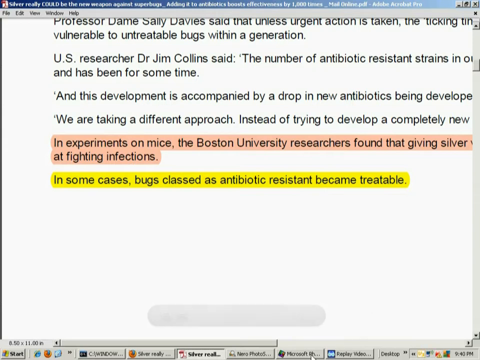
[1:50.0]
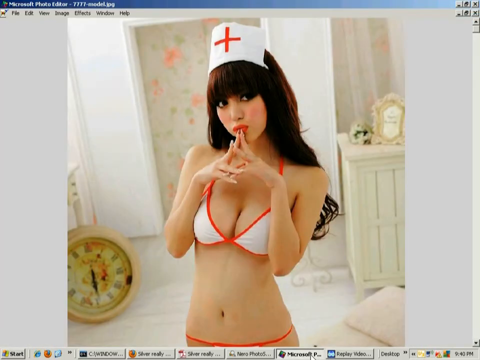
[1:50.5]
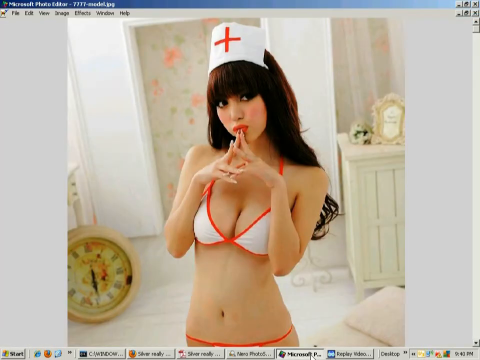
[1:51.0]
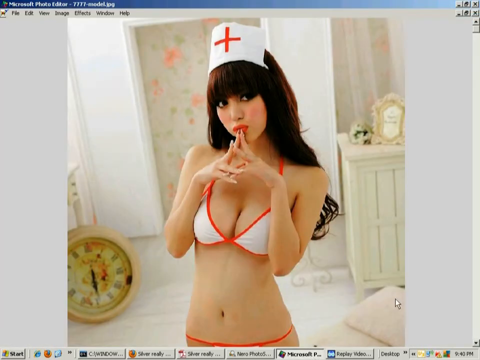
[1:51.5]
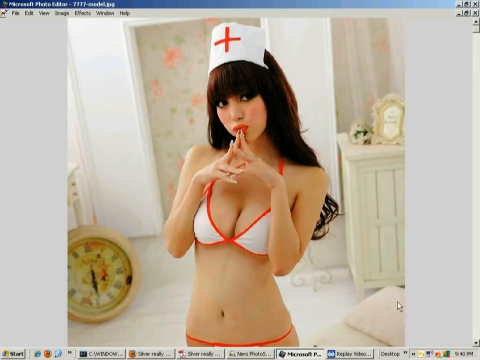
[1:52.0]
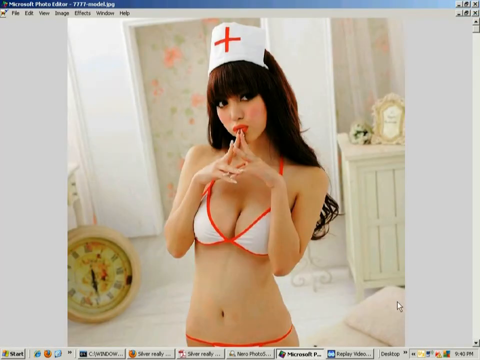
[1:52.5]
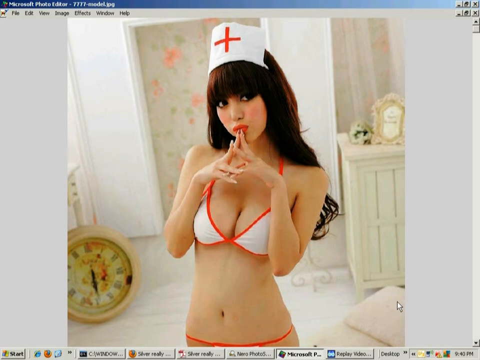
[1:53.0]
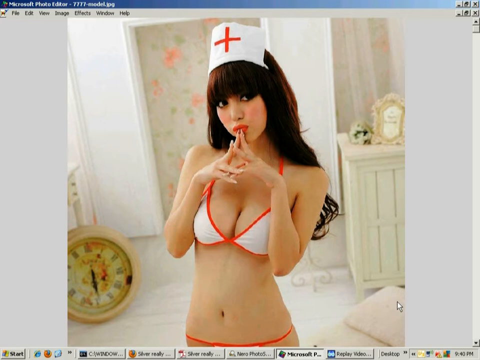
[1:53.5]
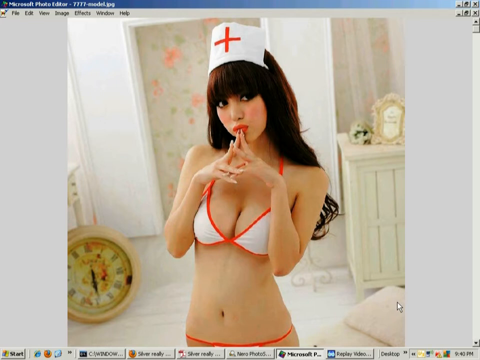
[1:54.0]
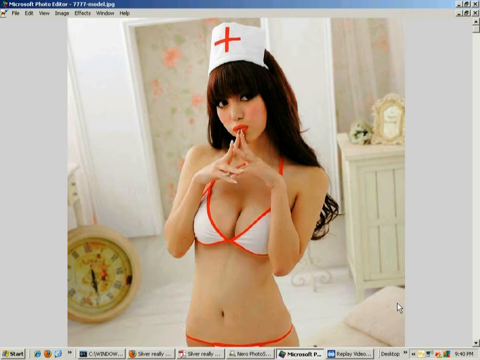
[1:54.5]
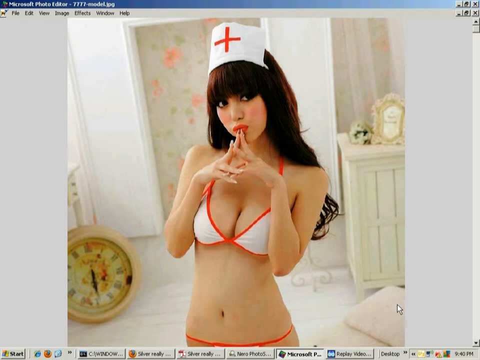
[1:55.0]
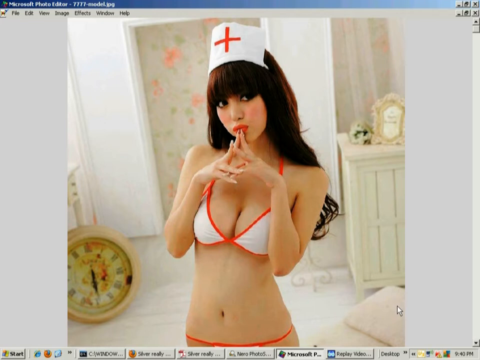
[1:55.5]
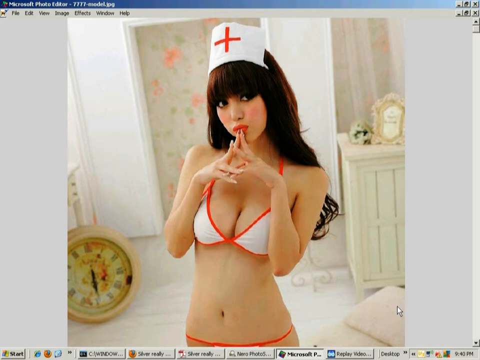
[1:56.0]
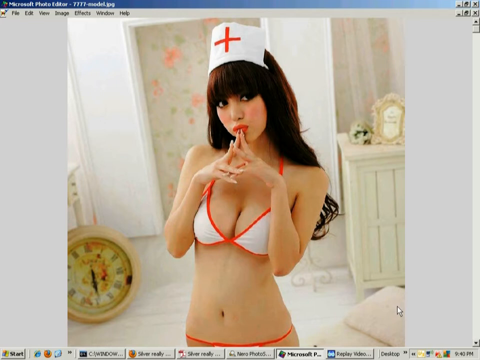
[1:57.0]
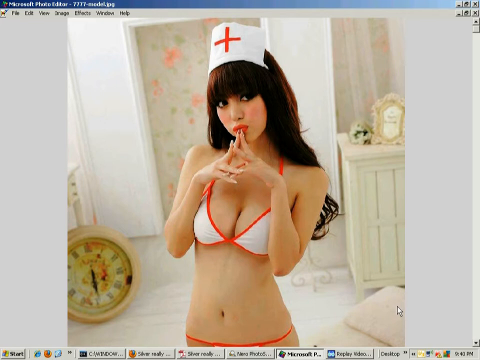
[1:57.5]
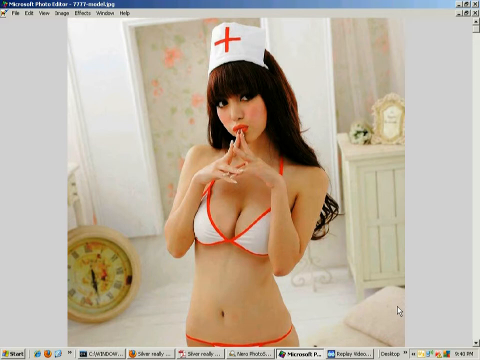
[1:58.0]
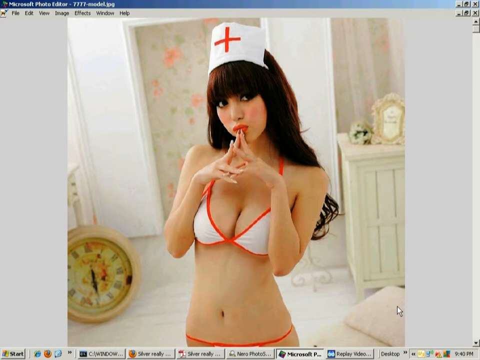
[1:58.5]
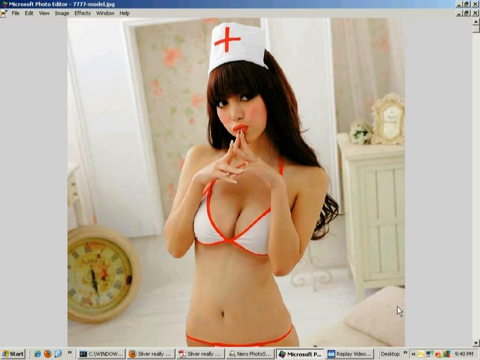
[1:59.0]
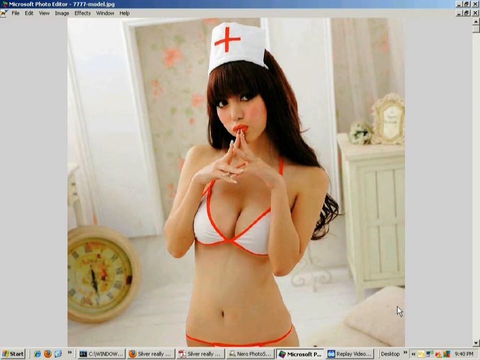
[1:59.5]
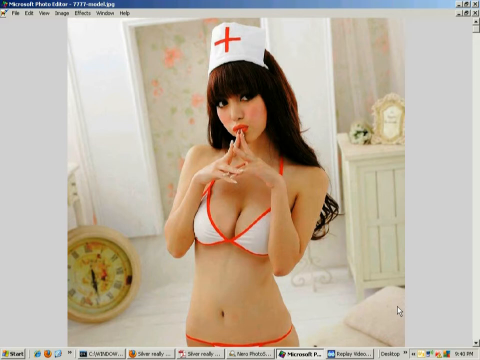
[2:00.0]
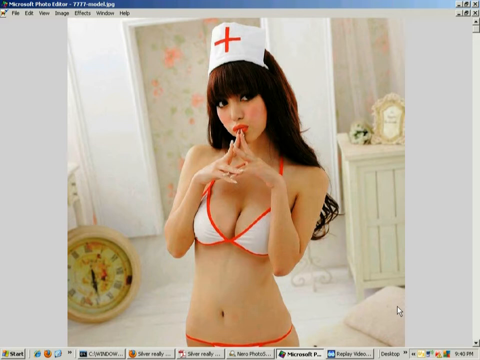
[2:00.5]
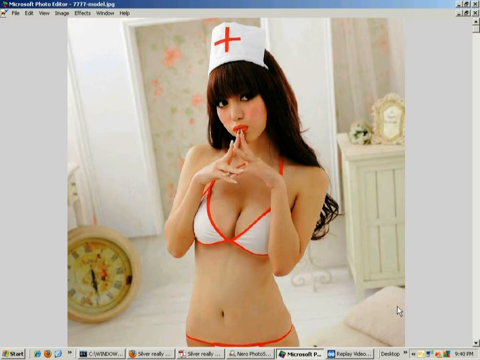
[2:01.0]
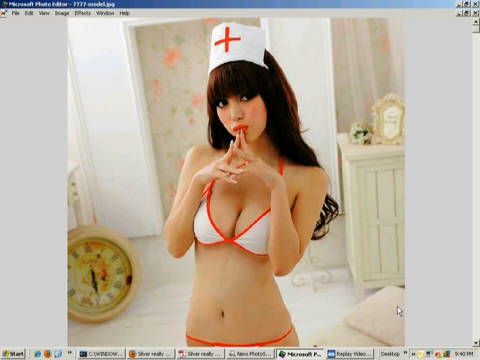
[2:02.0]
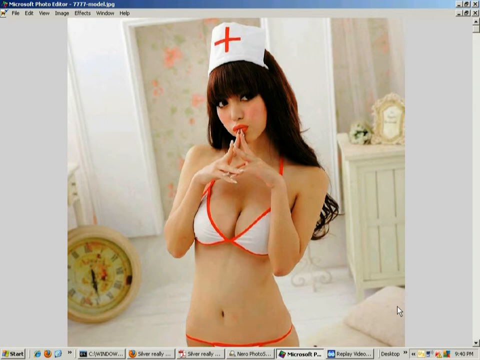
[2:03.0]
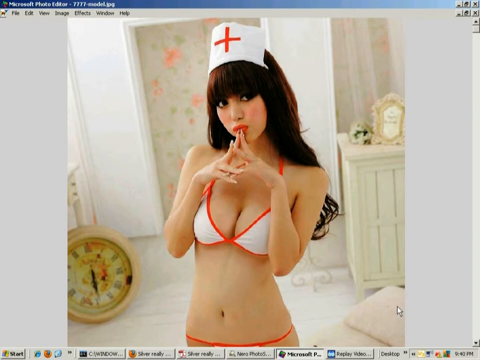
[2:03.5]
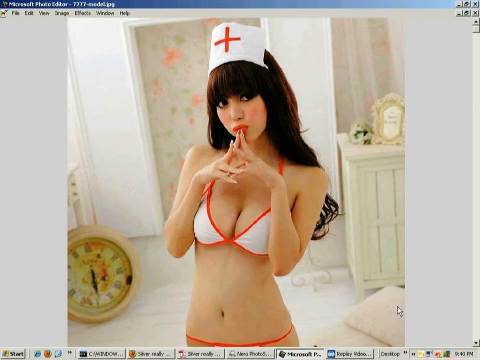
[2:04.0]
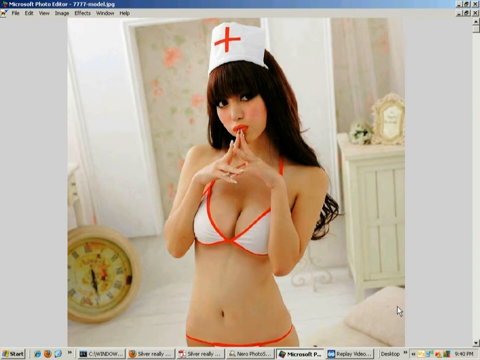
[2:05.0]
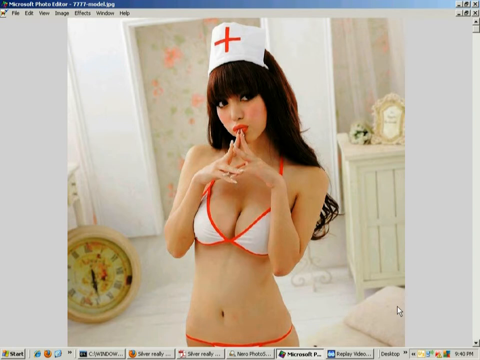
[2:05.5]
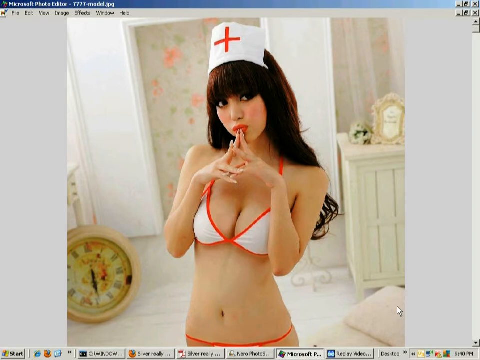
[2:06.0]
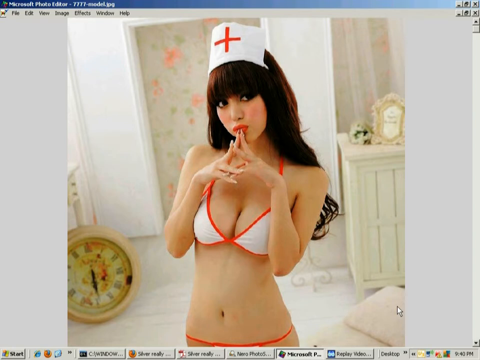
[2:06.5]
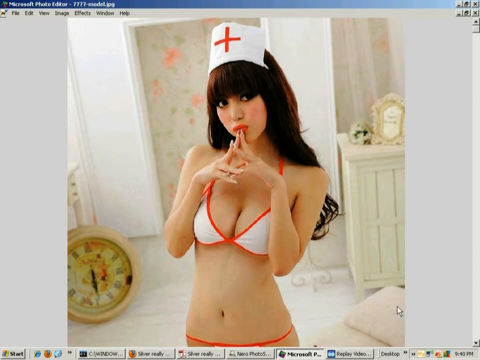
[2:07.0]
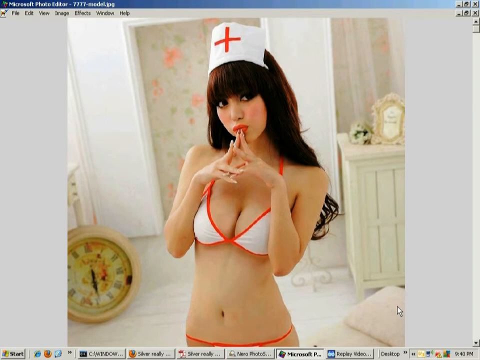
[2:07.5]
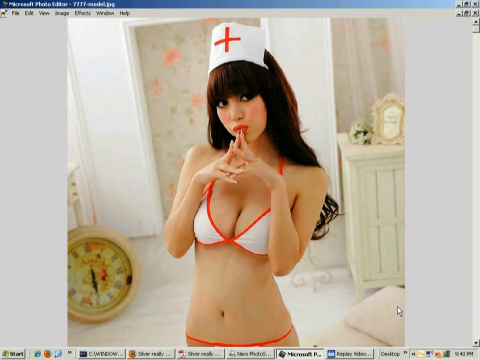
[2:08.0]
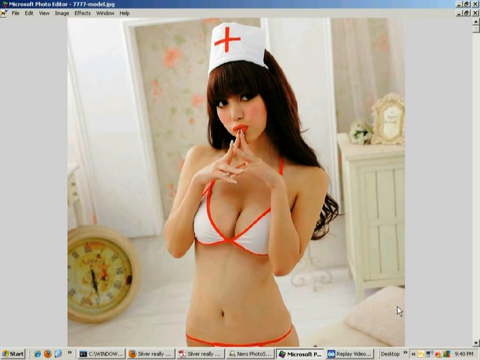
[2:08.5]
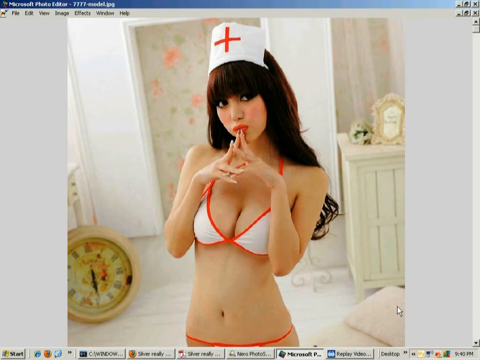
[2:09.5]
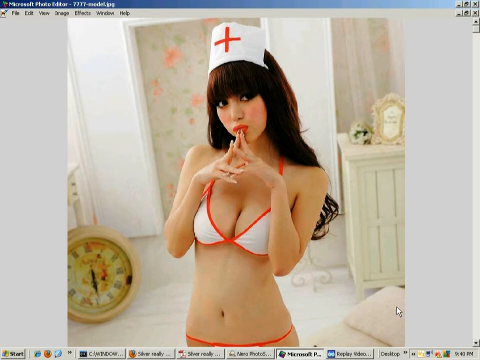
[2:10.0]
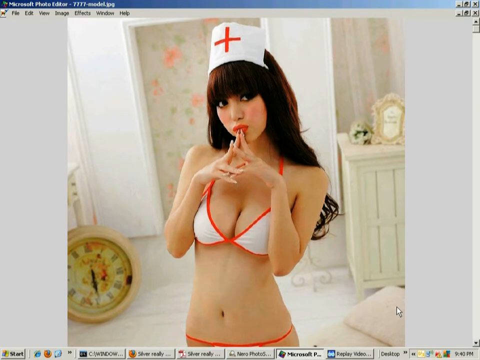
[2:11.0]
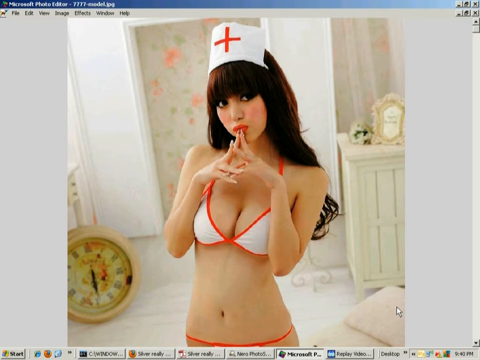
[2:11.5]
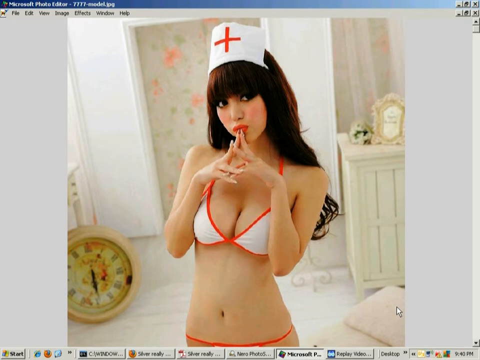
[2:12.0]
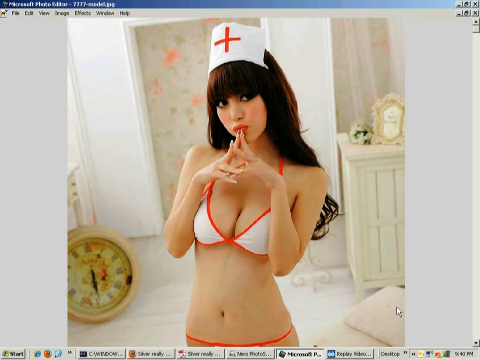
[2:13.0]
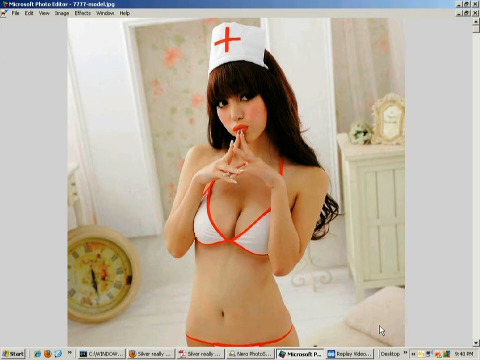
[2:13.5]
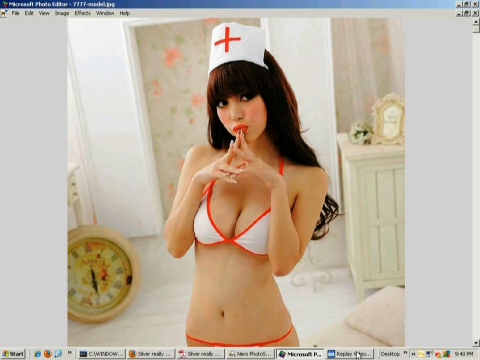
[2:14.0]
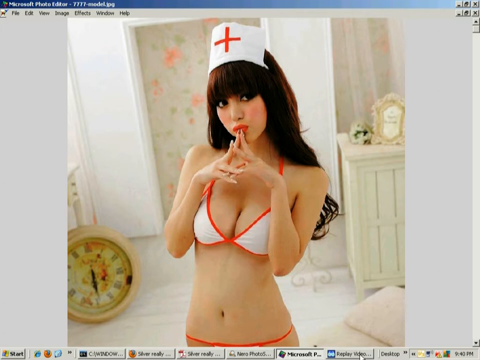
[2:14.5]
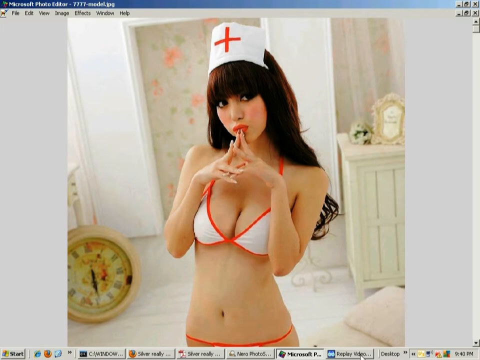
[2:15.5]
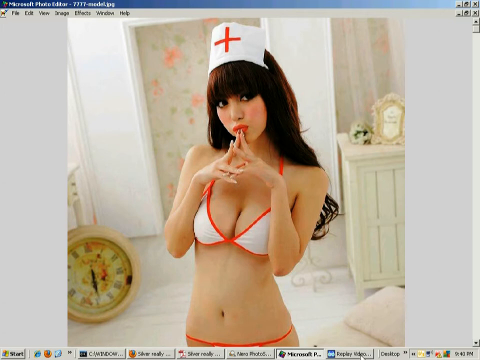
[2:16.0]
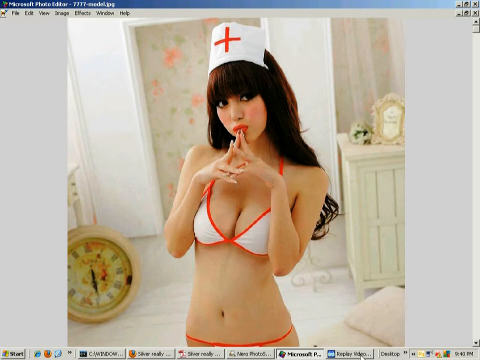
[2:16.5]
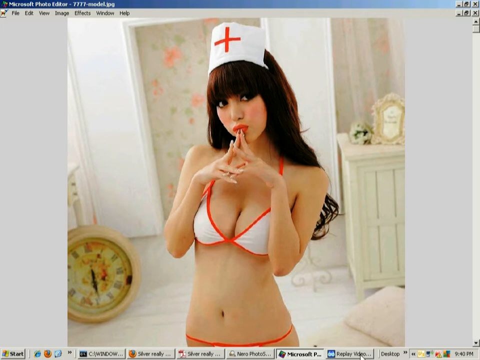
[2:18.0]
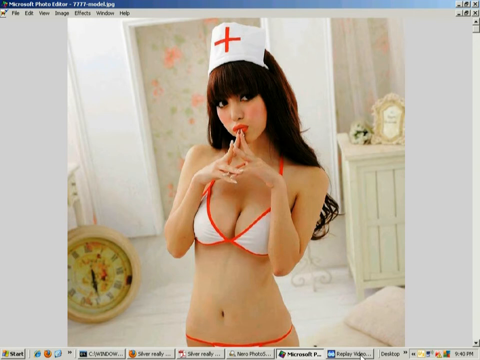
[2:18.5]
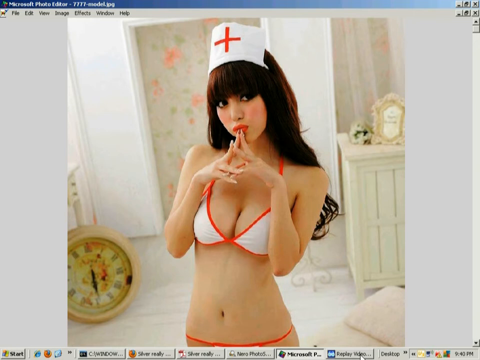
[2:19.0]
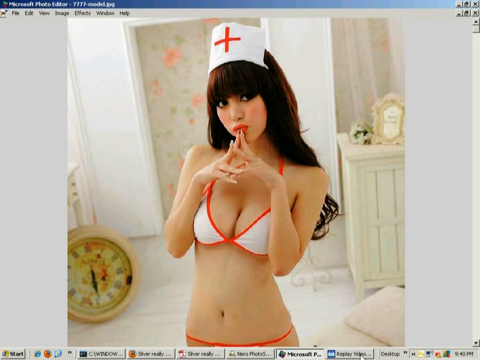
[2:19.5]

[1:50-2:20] The screen moves from the text to a different woman facing the viewer, also half naked and wearing seductive clothing resembling a nurse's. Behind her are pure white walls, clean cream cupboards and a clock on the floor, and flowers are on top of a chest of drawers behind her. She stands in a seductive posture with her hands and fingers close to her mouth, her eyes looking directly at the camera. Open tabs remain visible on the Windows 7 or older system. The article text shown earlier had two passages highlighted in different colors.